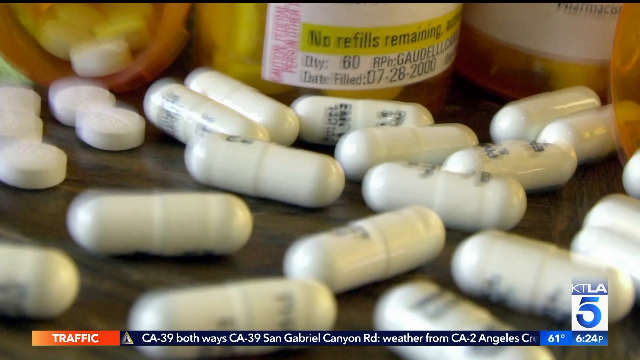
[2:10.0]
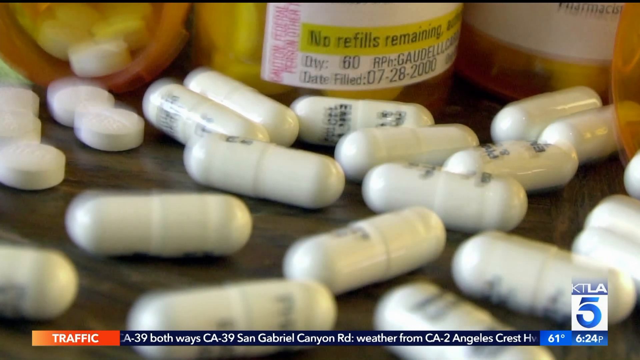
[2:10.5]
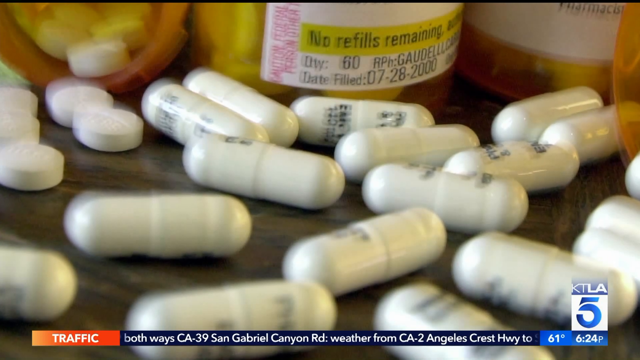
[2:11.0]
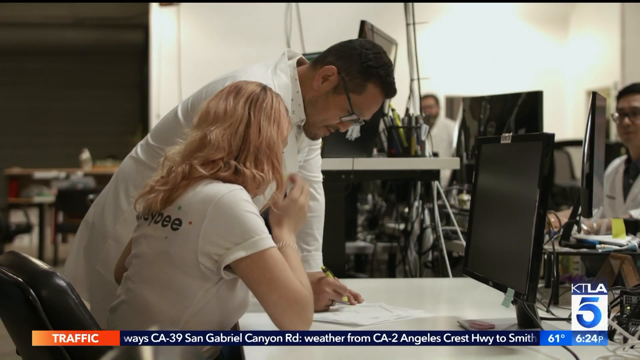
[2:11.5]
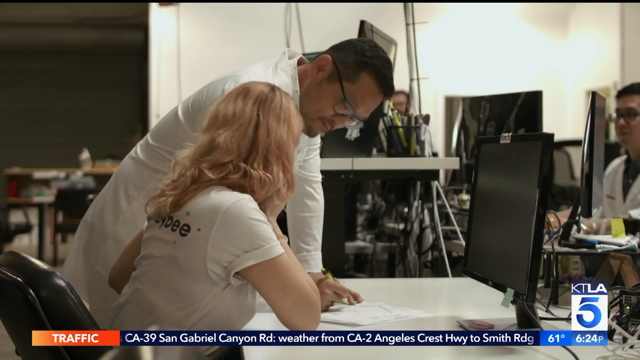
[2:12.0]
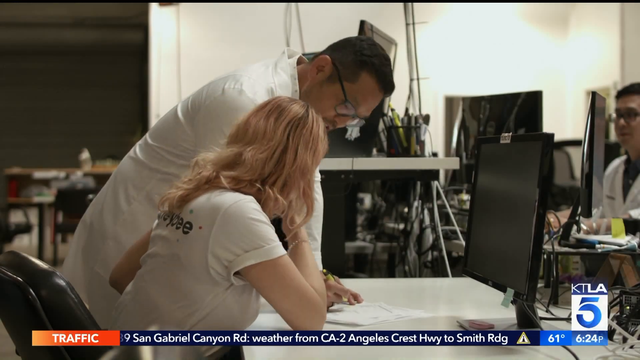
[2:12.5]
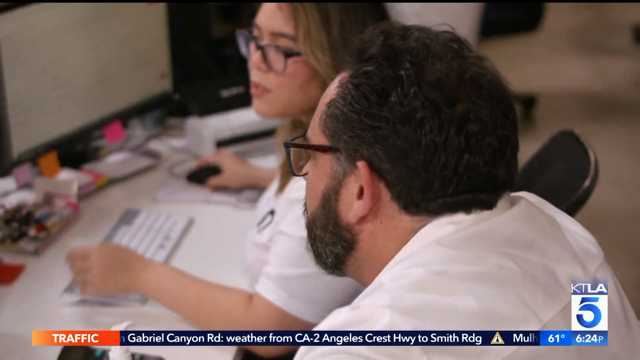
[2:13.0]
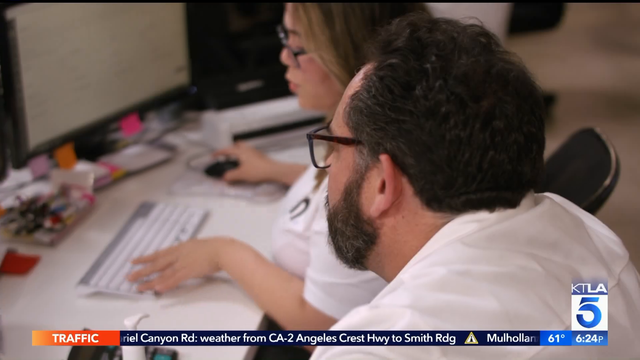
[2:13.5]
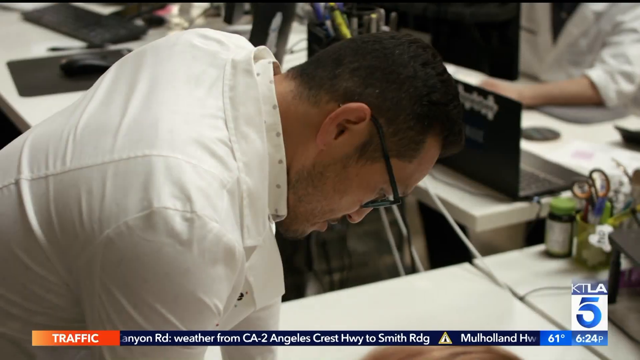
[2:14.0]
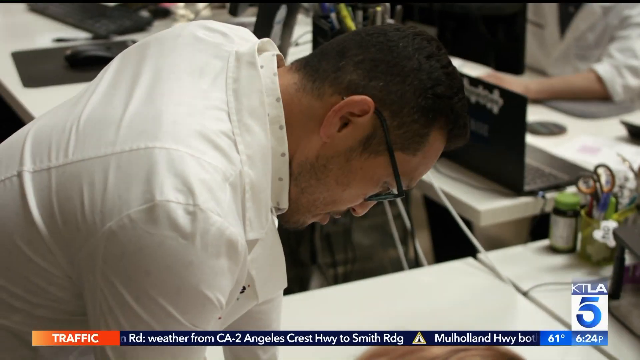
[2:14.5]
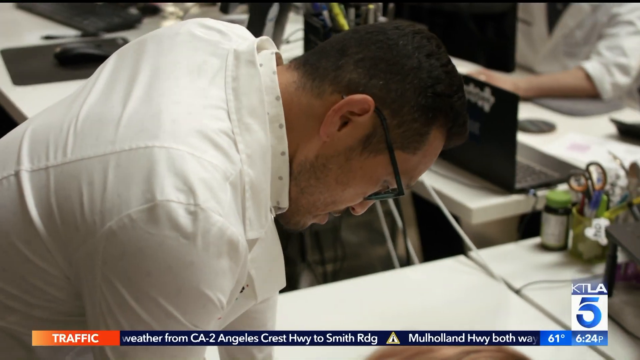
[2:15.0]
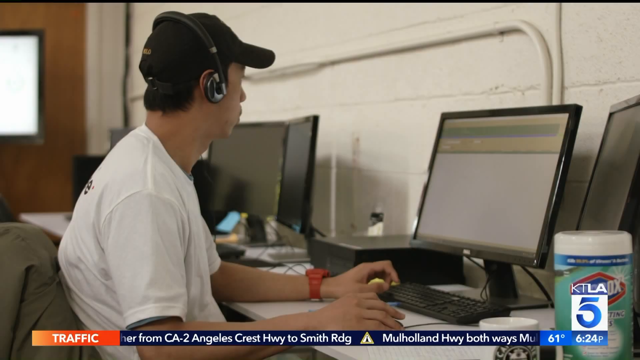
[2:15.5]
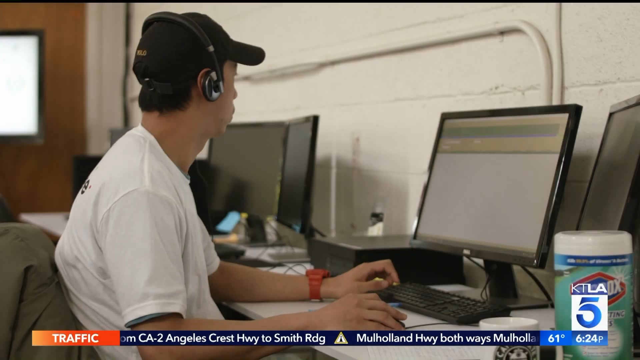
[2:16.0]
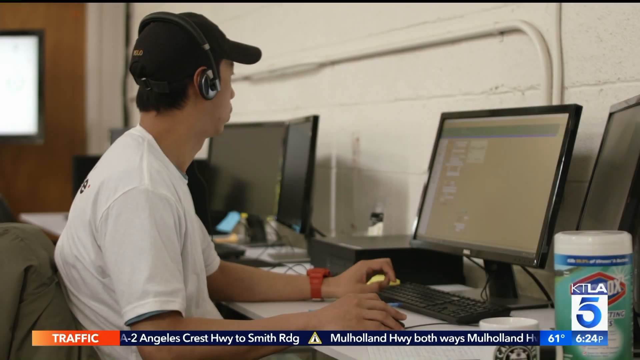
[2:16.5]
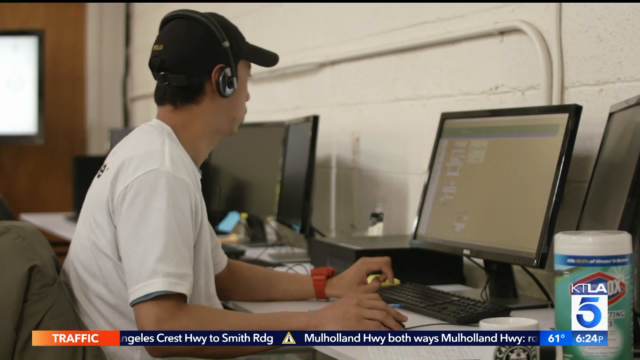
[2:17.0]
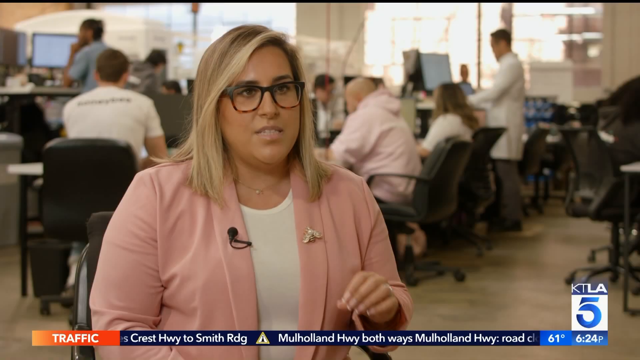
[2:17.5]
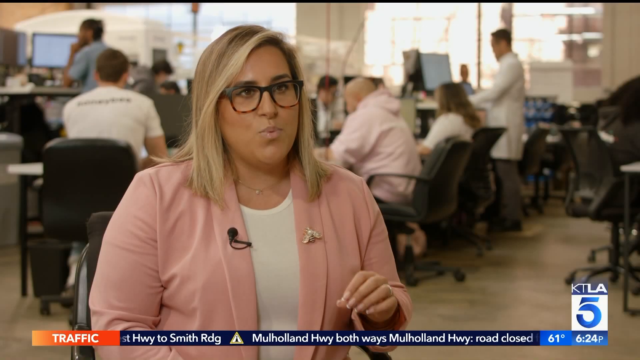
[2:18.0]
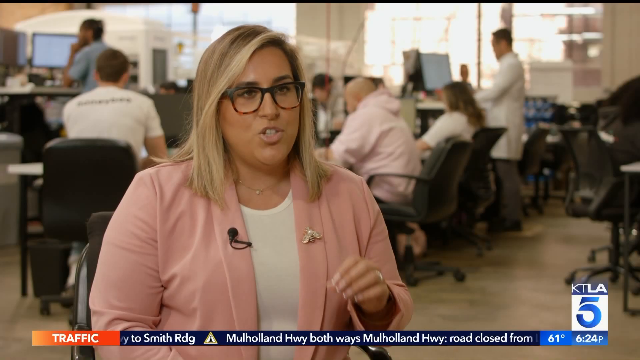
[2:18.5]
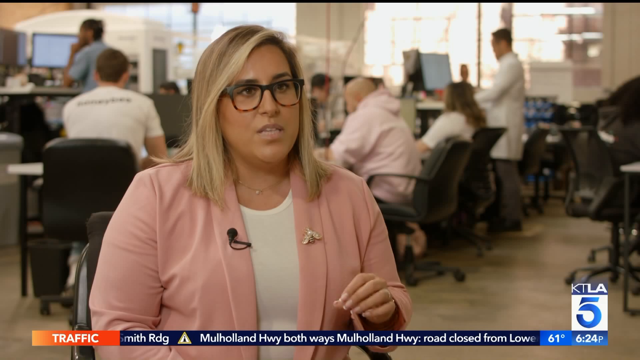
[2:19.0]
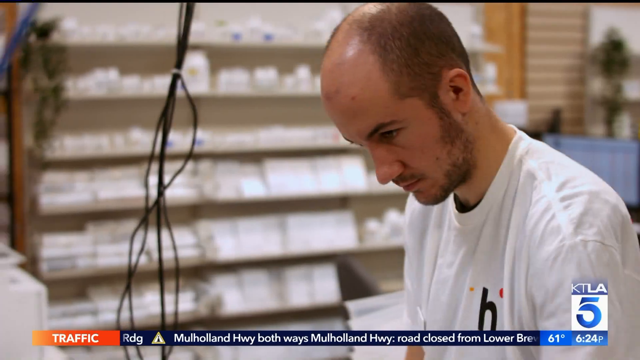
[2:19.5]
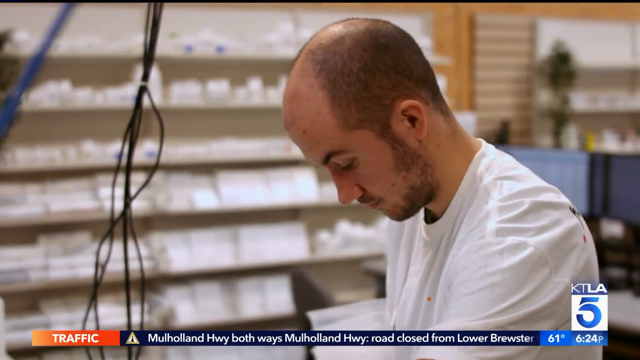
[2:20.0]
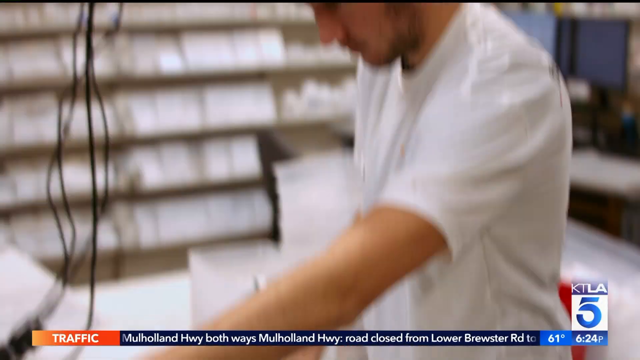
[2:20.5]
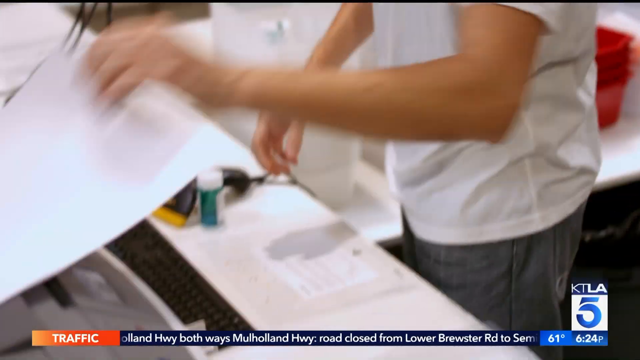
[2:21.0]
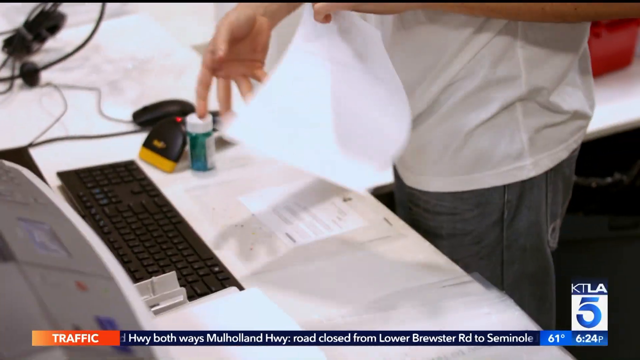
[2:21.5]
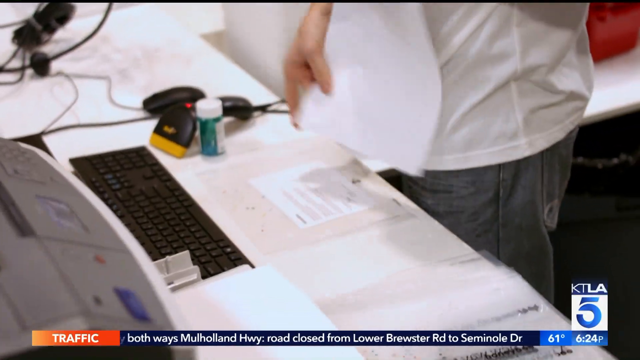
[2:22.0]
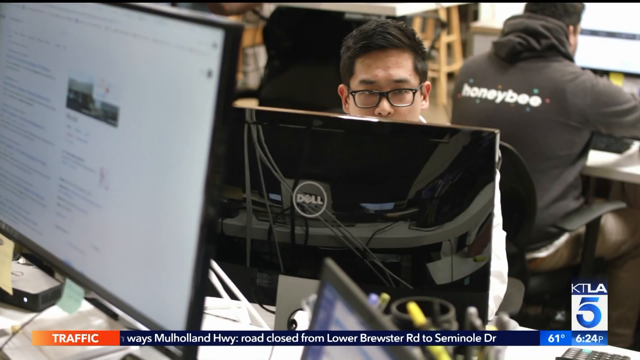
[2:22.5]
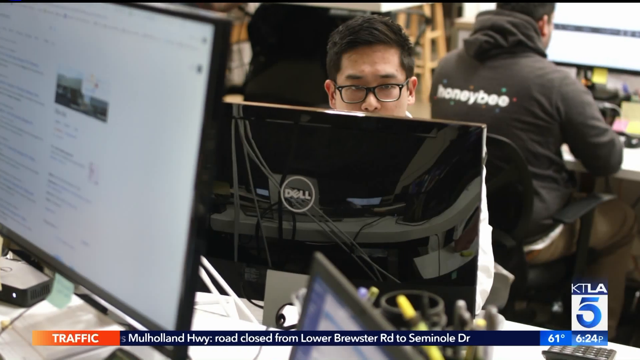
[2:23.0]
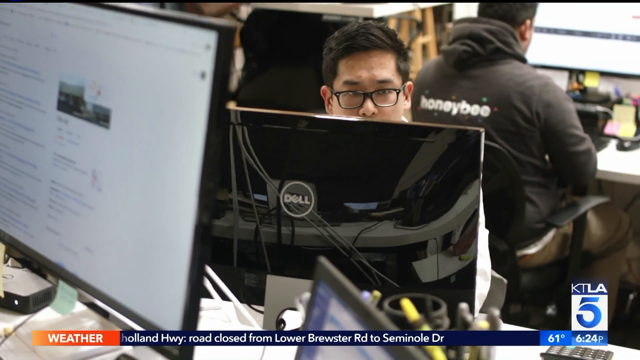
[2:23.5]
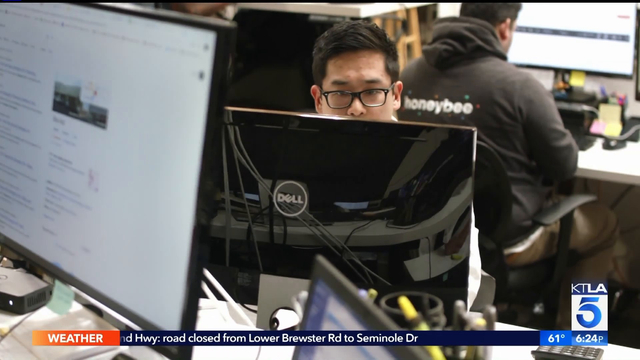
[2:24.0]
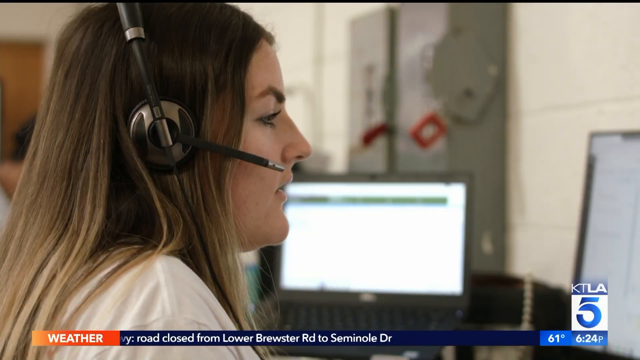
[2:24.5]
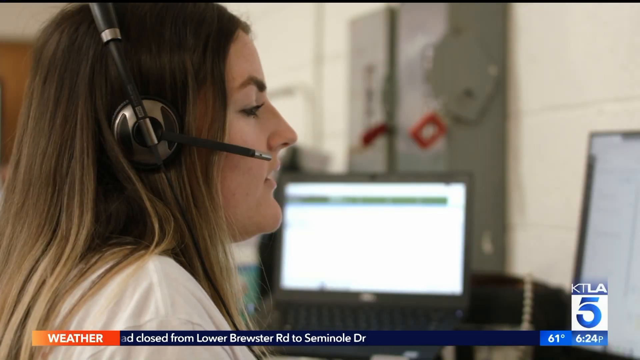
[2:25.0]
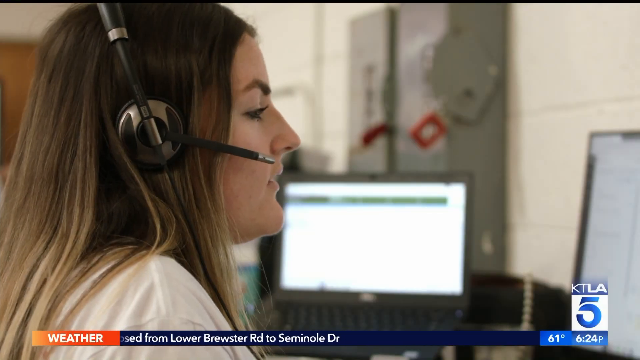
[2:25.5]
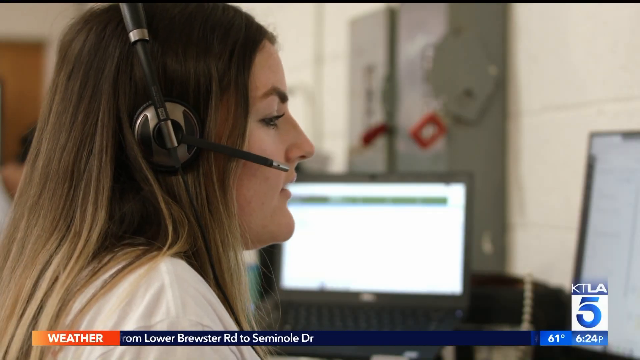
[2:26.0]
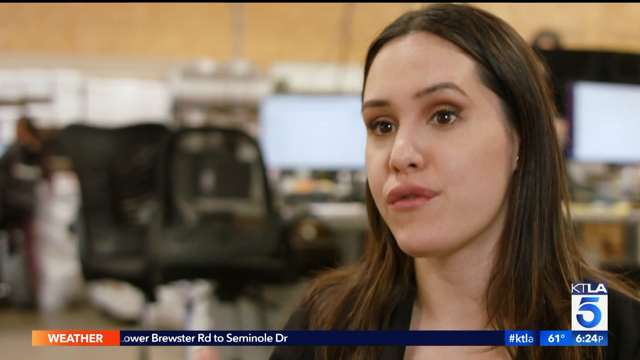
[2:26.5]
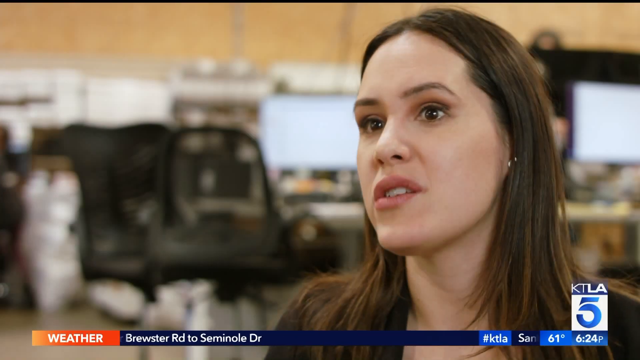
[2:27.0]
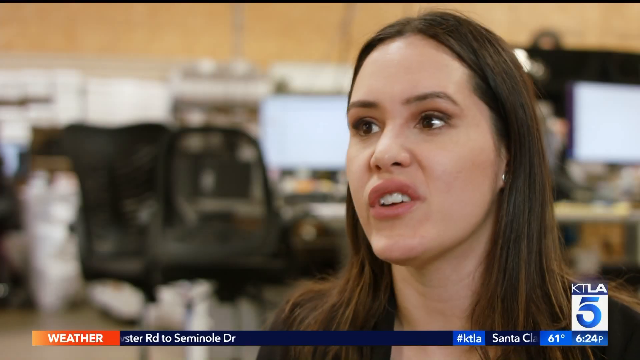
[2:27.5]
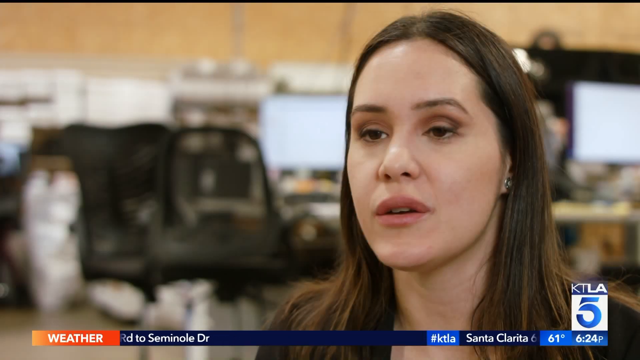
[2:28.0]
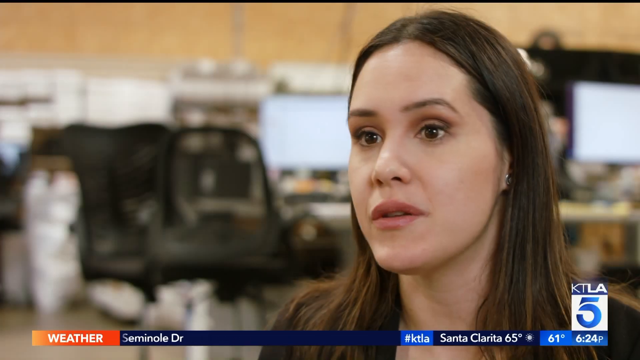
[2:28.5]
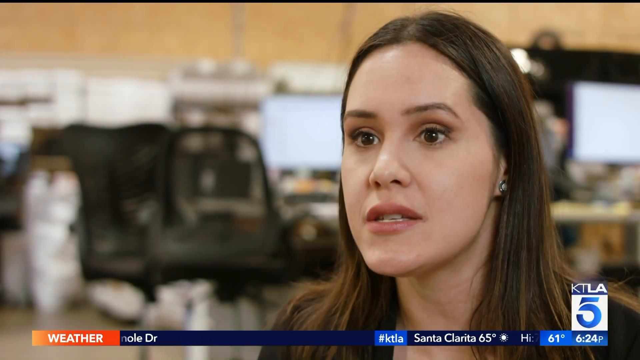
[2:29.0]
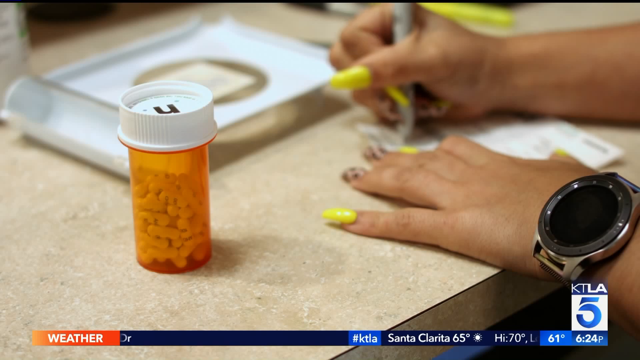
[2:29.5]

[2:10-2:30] White pills and capsules are on a countertop in front of four amber bottles; two lie on their sides with pills spilling out and two are upright. Writing on the bottom of a bottle says "no refills remaining" along with when it was filled. The camera pans back to the call center, where a woman in a white short-sleeved shirt works at a computer desk while a man with dark hair, a salt-and-pepper beard and glasses stands kind of behind or over her shoulder, looking at her screens. Another man is hunched over a desk, and the camera pans to a different man sitting at a computer in a white honeybee t-shirt with a headset on top of his head. Someone in a white shirt with a large H on the chest stands in a pharmacy area and pulls a piece of paper off a printer. Another view of the call center shows the back of a Dell computer and a man looking at his screen.